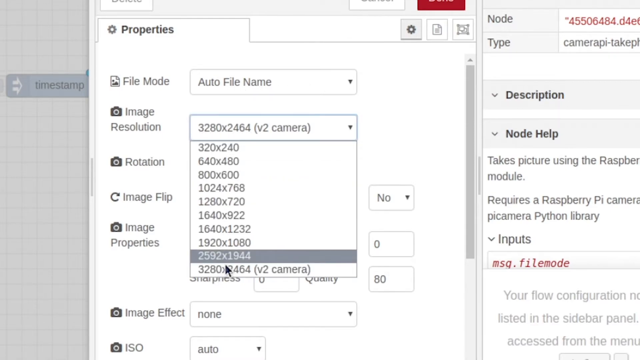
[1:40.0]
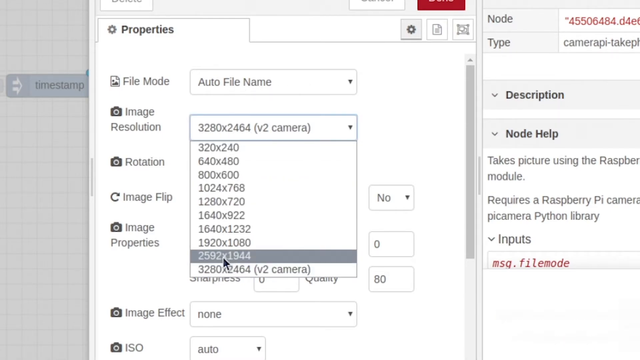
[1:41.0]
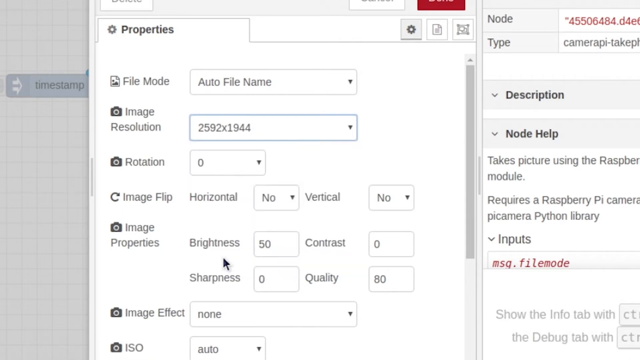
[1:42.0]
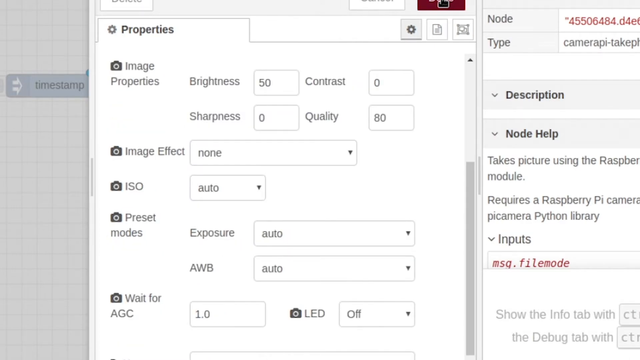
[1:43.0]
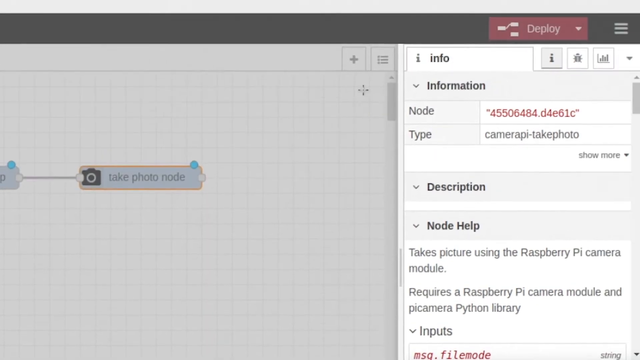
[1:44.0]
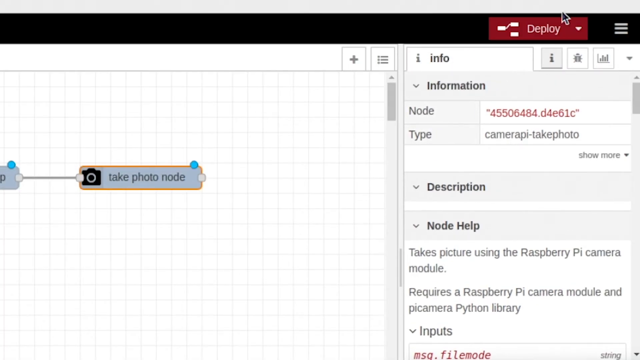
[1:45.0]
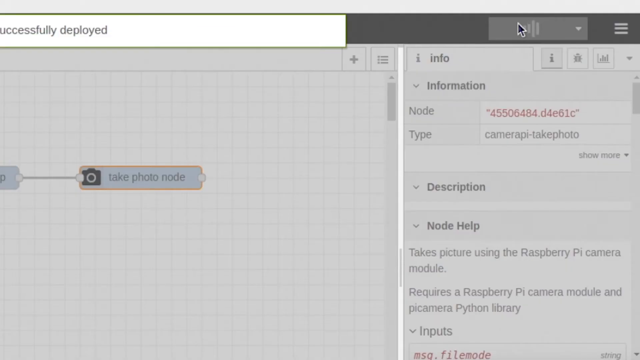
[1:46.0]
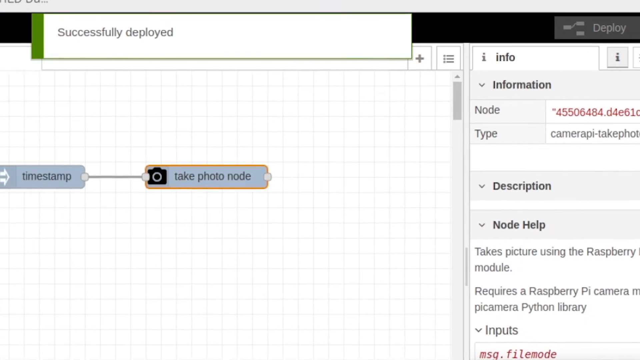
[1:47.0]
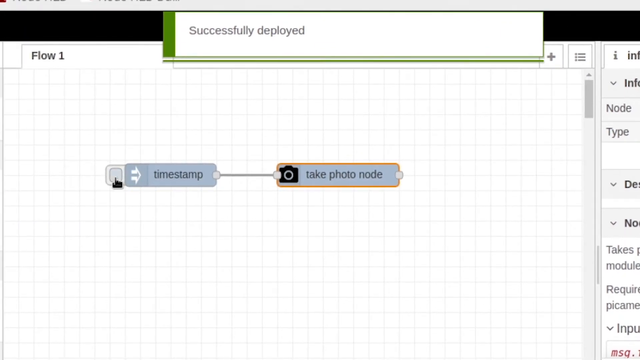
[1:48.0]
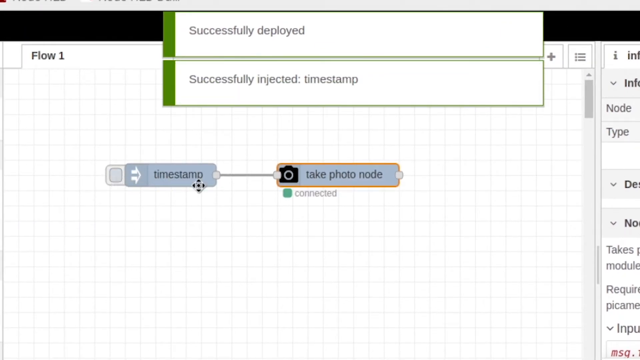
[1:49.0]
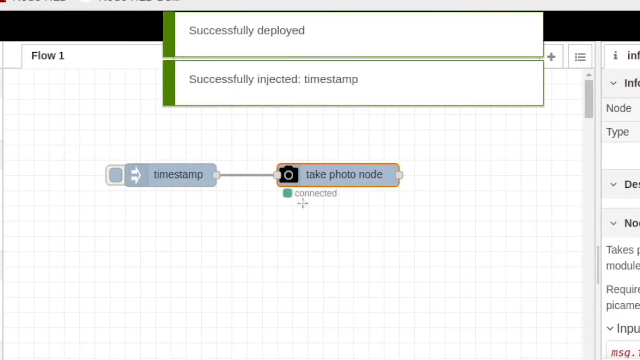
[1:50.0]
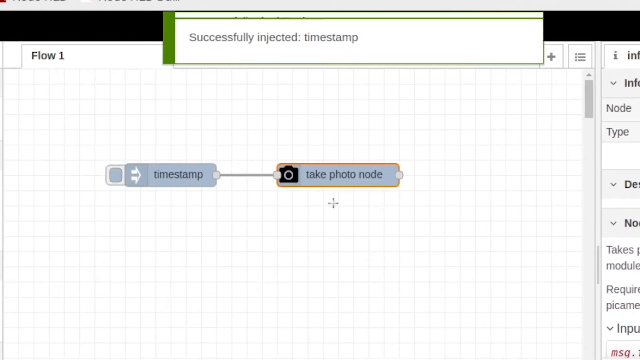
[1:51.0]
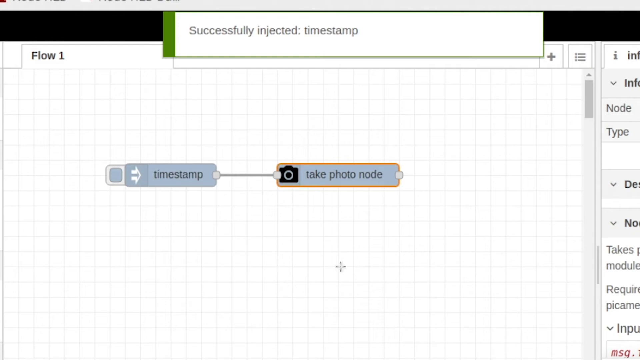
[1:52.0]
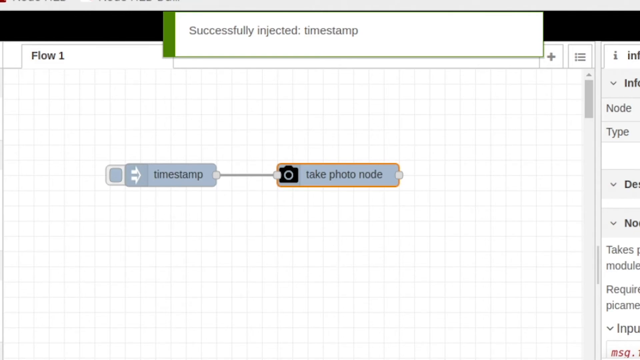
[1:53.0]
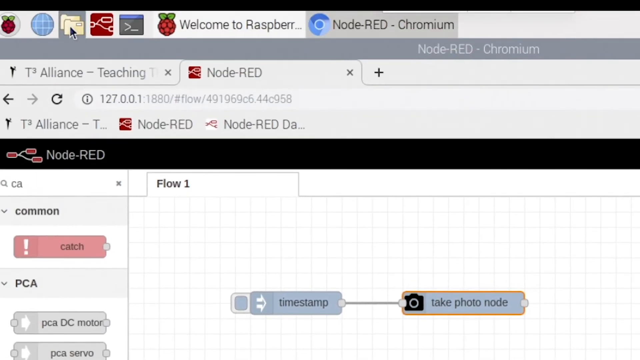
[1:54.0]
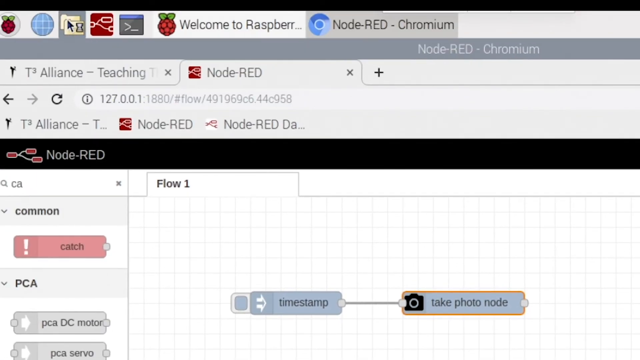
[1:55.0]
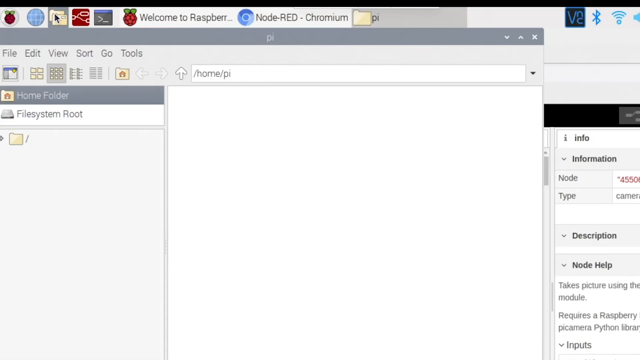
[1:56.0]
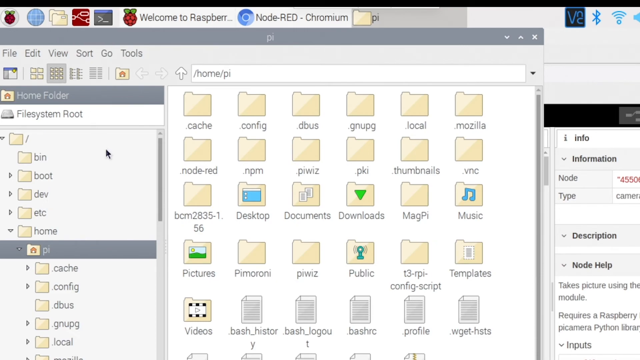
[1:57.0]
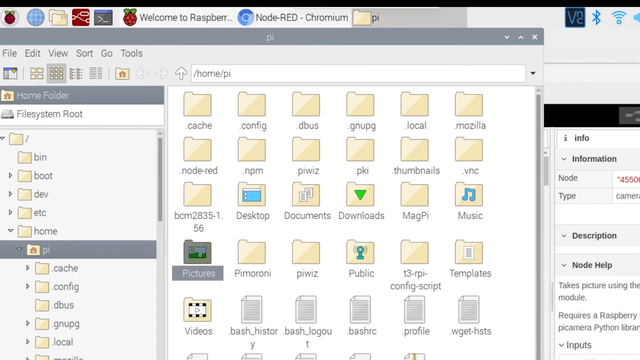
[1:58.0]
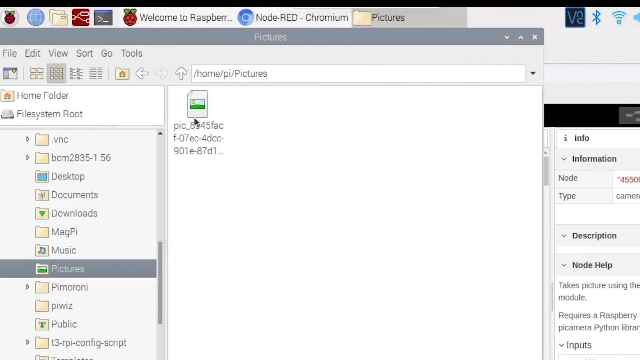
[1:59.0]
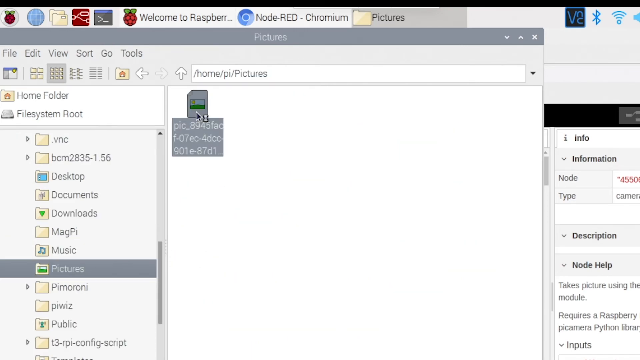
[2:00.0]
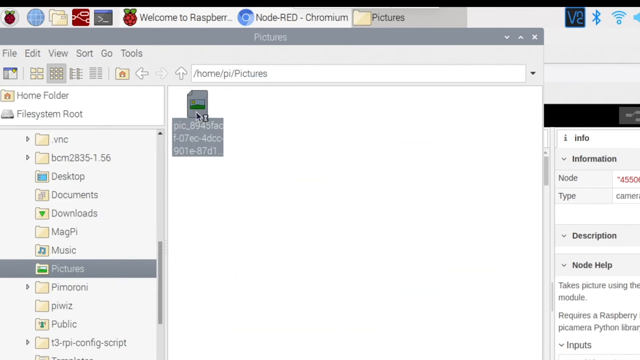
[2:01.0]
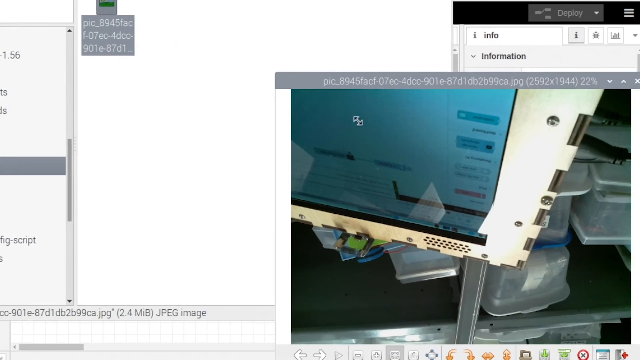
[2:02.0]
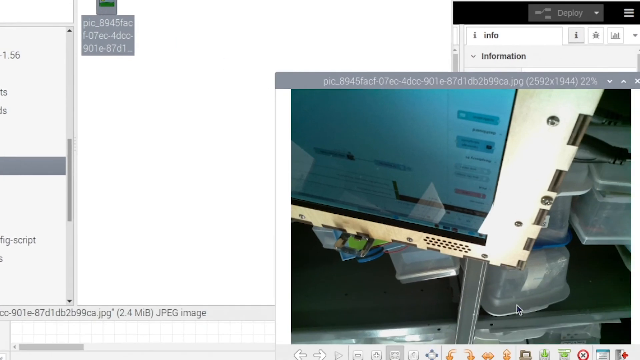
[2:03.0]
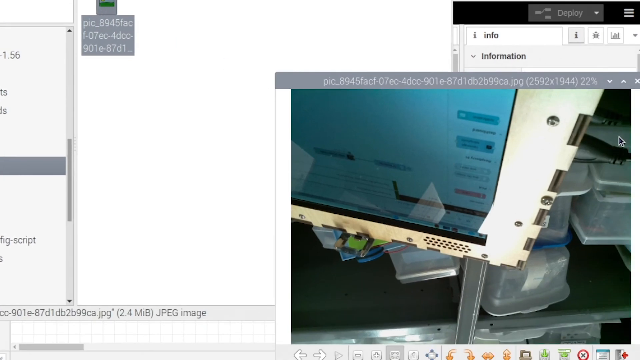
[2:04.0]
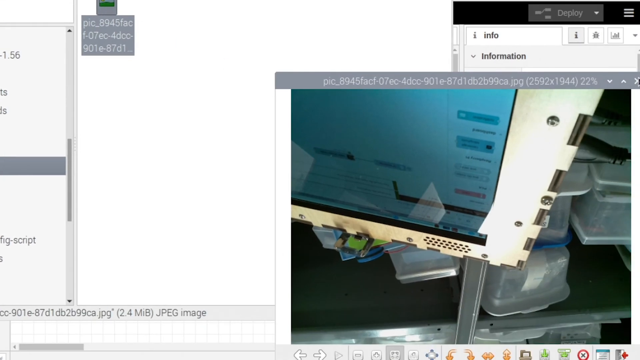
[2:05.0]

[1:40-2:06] The properties section is shown, and the camera image resolution is chosen: someone selects the third resolution from the bottom. The view switches to the timestamp and take photo flow, with text saying "successfully deployed" and "successfully injected timestamp", and the cursor shows the connection. Someone then opens the file manager and clicks on "pi", which opens a picture, and clicks on the picture. It shows some sort of computer setup; what it is is unclear, but it looks like a white camera with a blue screen, and in the background is a stack of upside-down plastic boxes on a shelf area. This is an inset JPEG image from the picture folder.